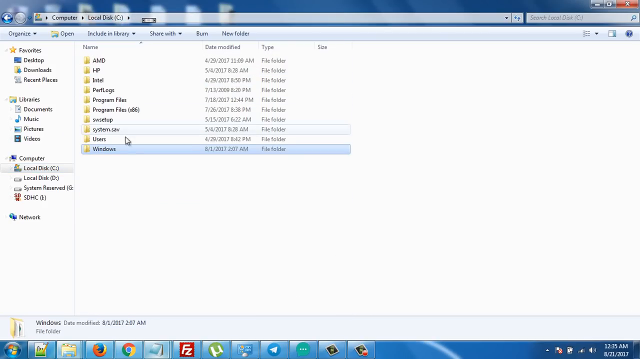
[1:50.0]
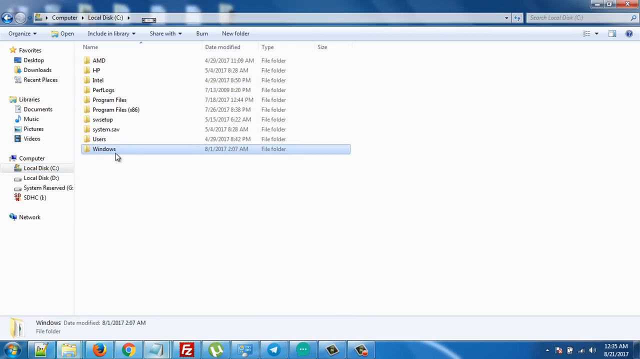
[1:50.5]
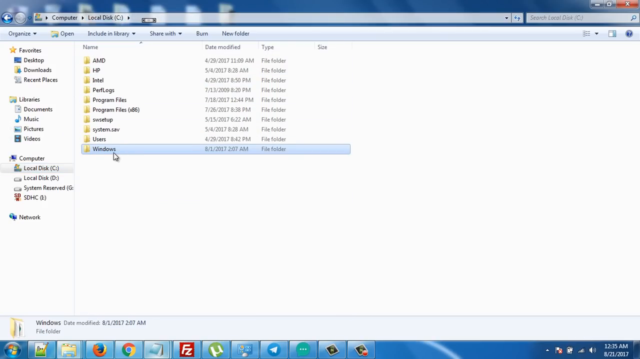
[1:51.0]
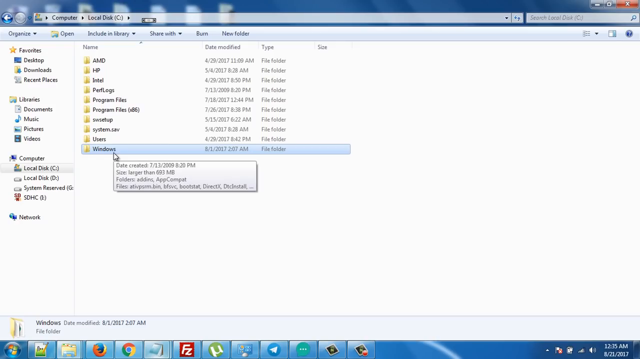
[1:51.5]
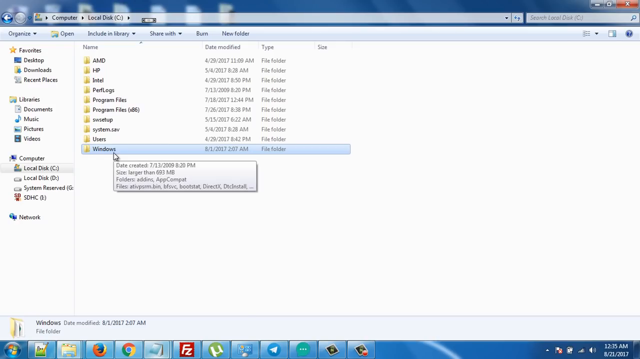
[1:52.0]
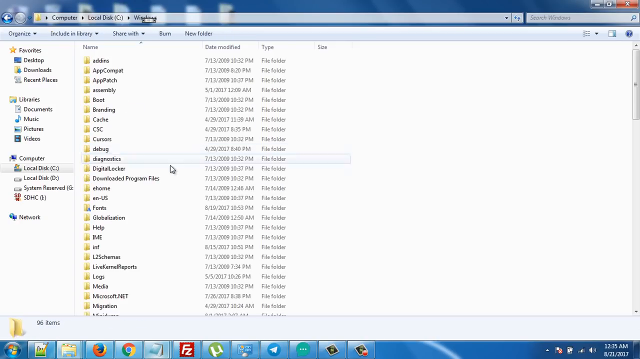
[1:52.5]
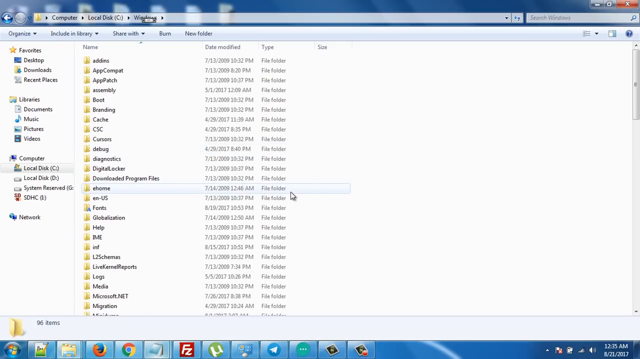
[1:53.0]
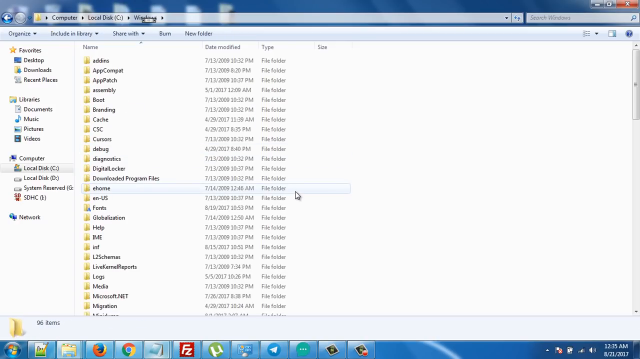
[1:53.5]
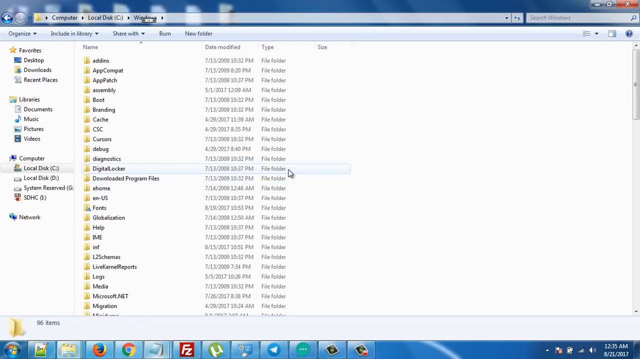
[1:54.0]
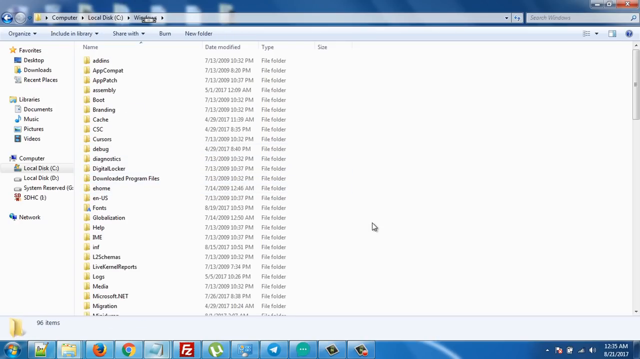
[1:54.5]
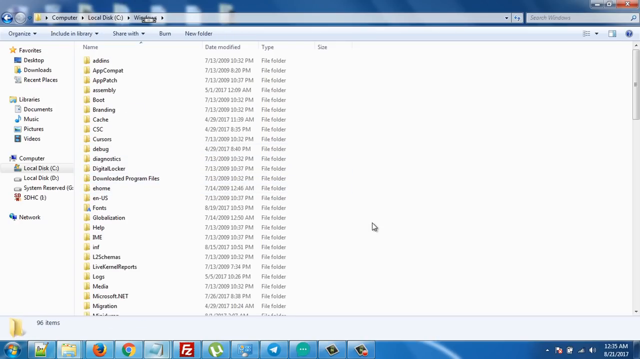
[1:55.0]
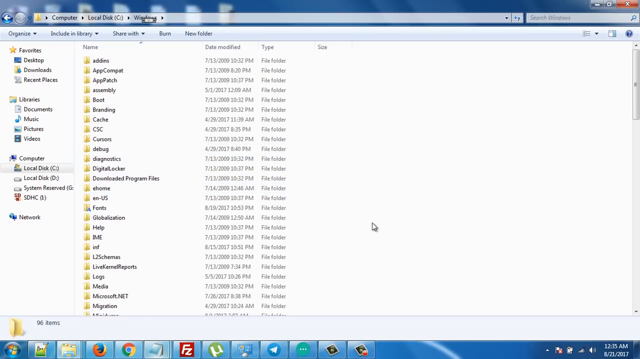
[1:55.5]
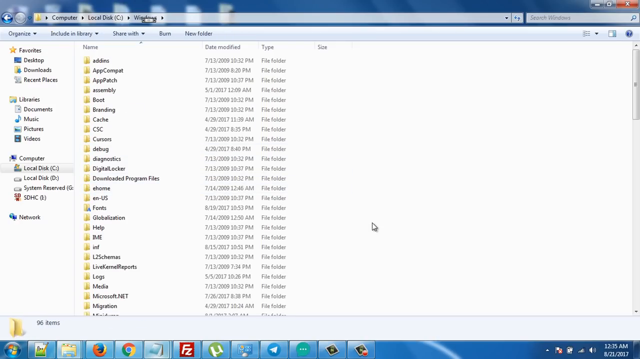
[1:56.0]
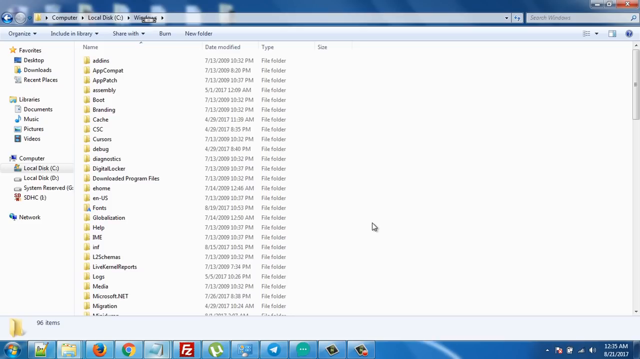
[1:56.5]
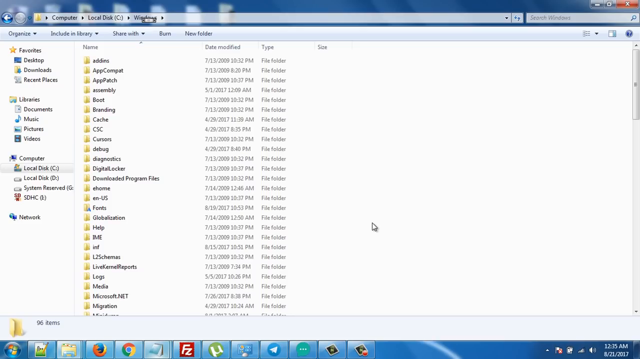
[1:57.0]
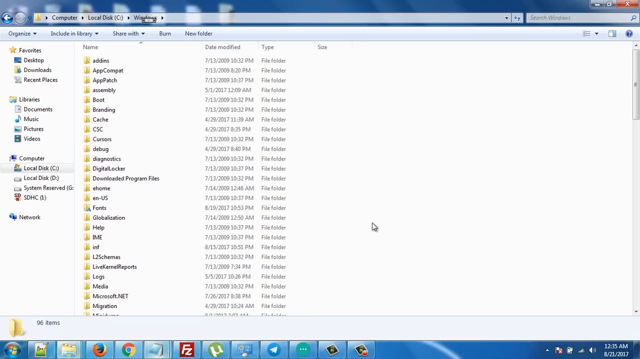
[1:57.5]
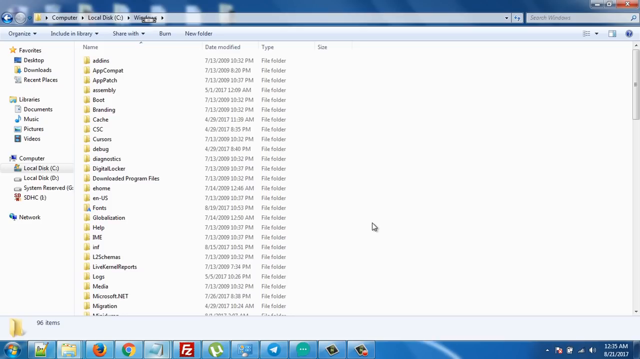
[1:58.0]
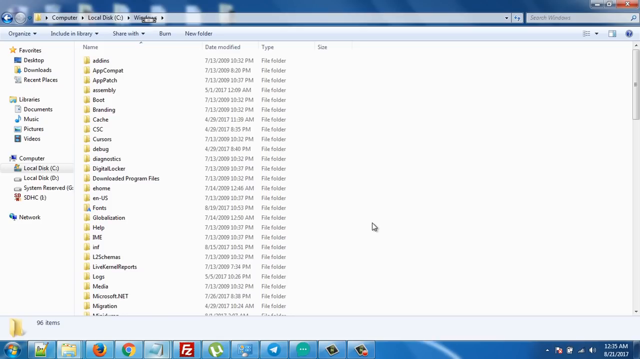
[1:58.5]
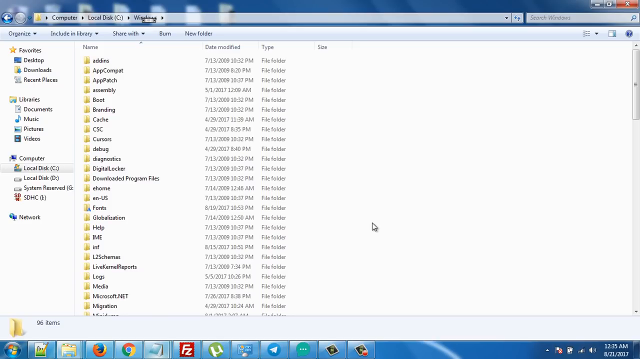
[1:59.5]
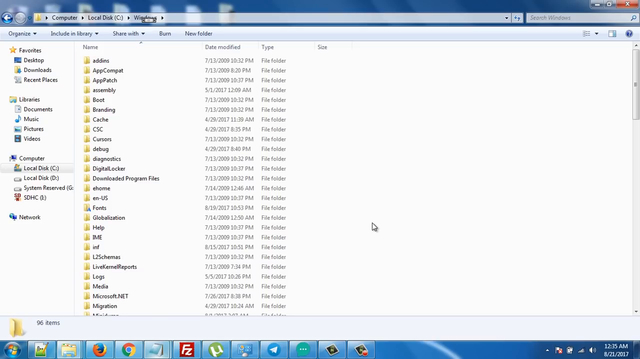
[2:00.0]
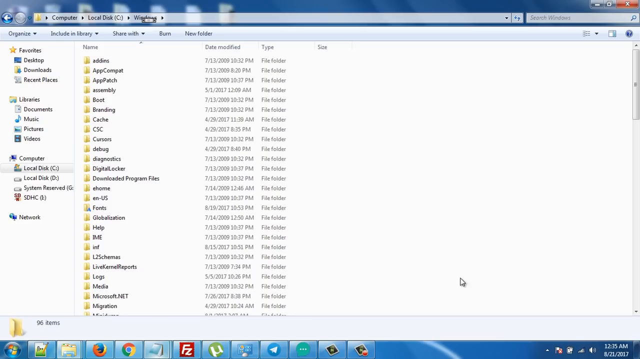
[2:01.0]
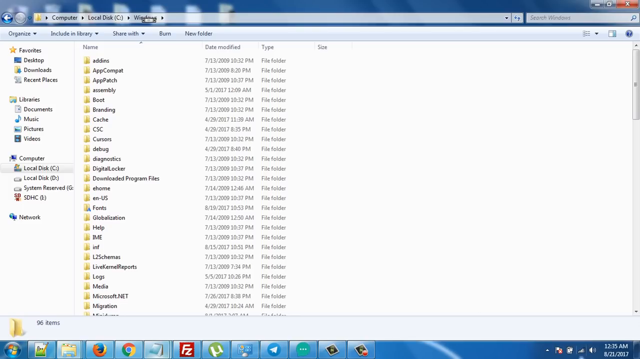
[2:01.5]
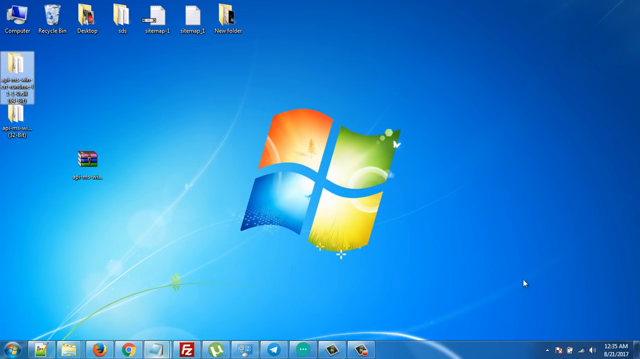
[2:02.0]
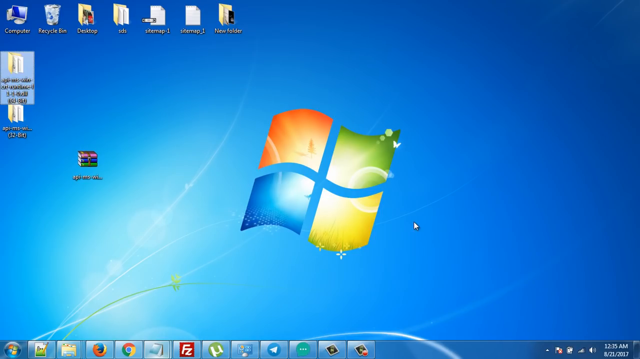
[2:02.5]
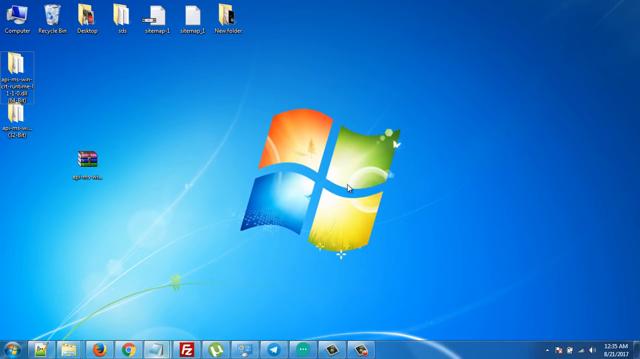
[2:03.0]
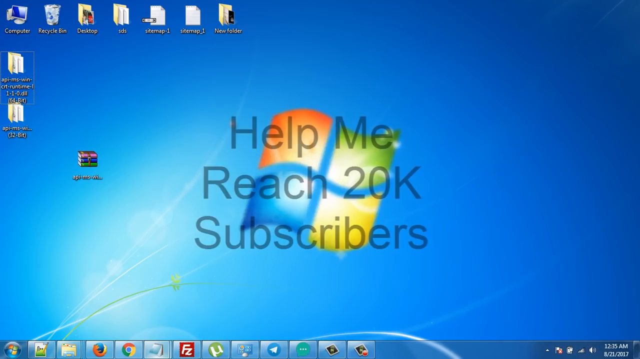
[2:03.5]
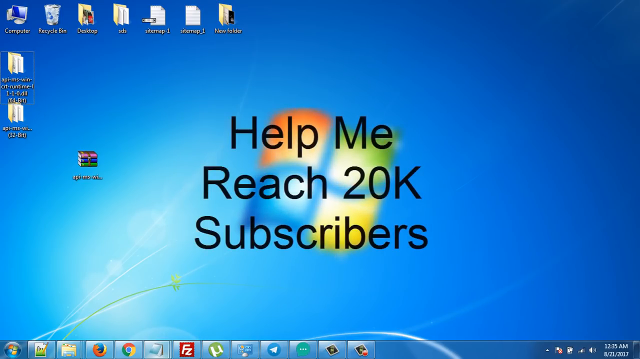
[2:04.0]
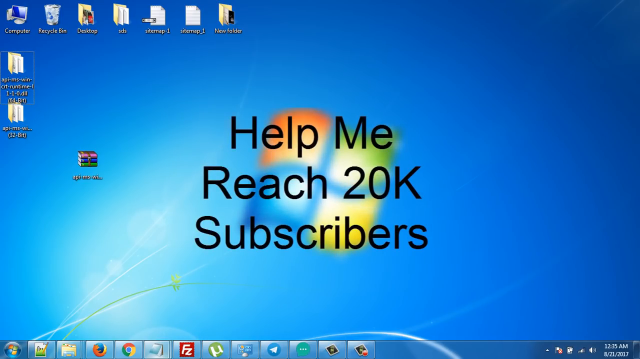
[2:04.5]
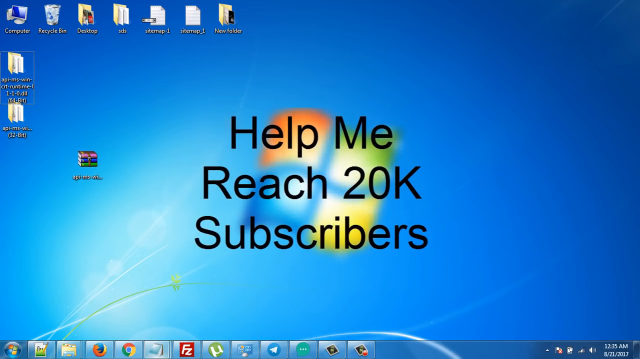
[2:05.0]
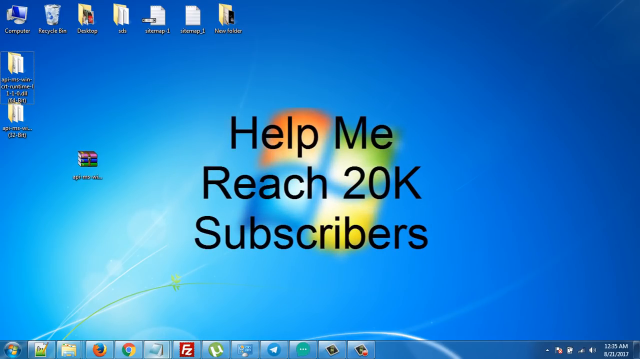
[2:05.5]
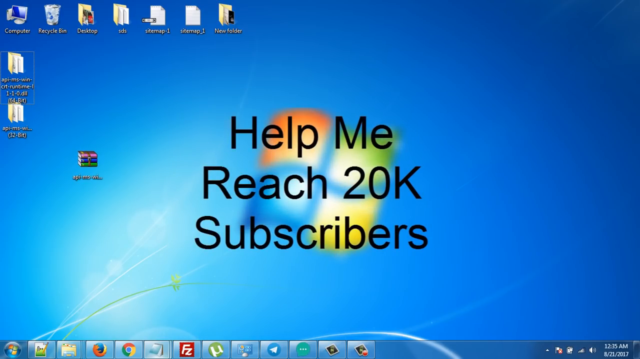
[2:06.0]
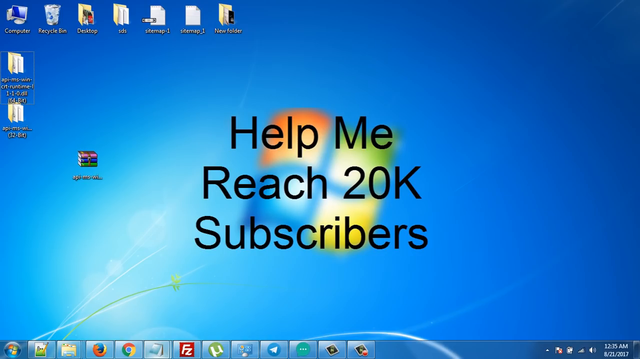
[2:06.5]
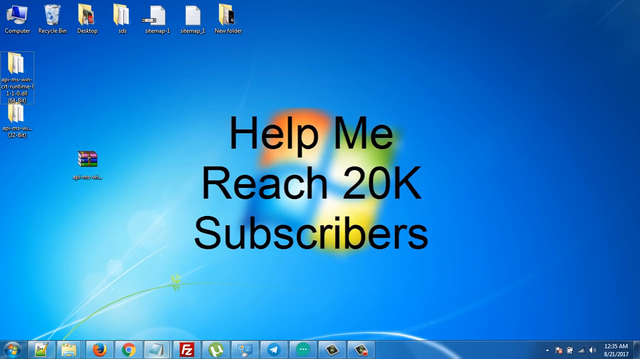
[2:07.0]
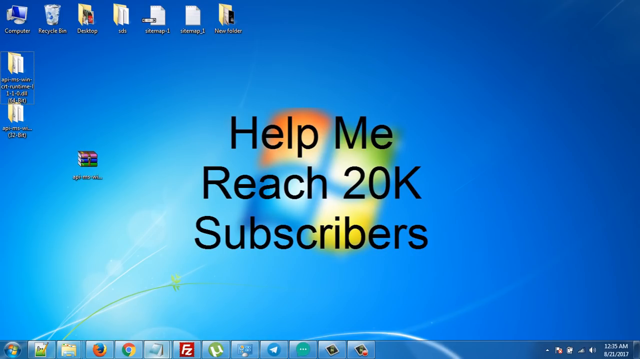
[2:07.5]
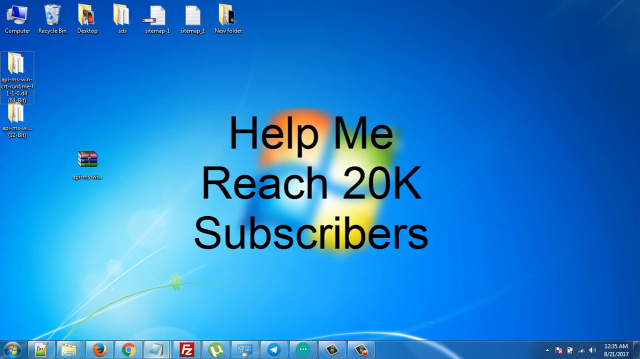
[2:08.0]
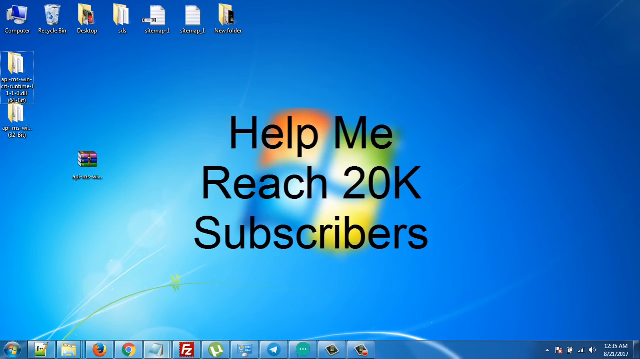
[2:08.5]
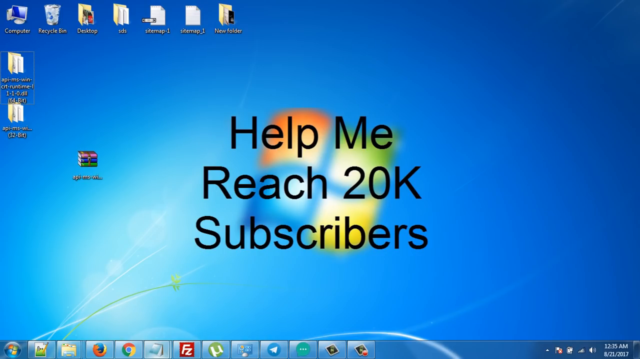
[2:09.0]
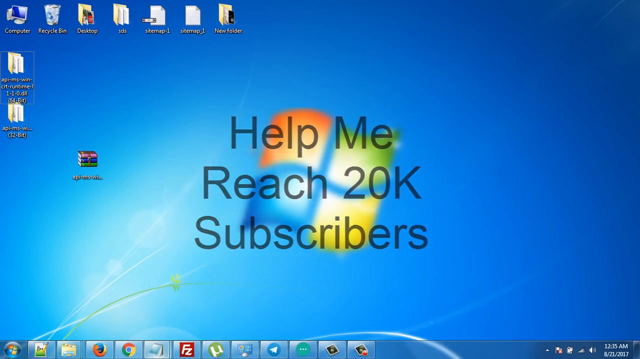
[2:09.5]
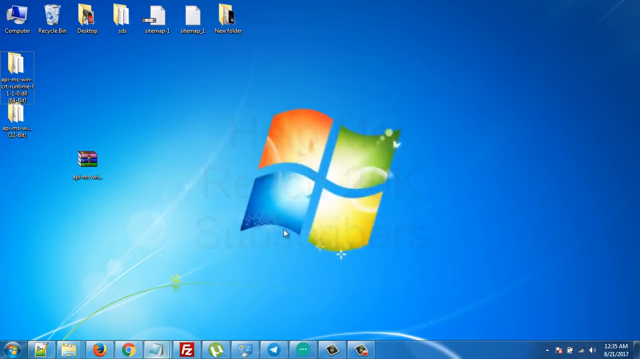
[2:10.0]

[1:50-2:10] The person clicks on Windows. The same white backdrop shows a whole bunch of open folders on the left-hand side of the page. The view then goes to the Windows front screen, where the blue background with the personal files that have been opened shows black text reading "help me reach 20K subscribers." The view returns to the main white page, where the cursor stays still.